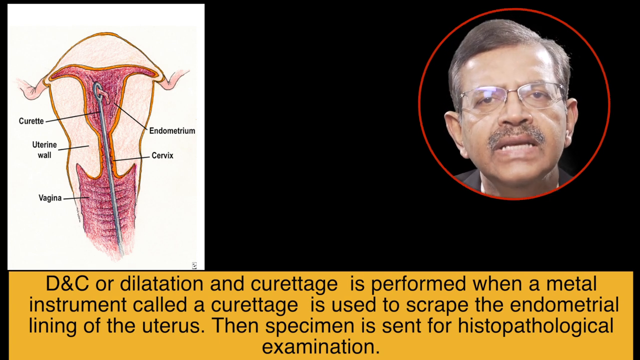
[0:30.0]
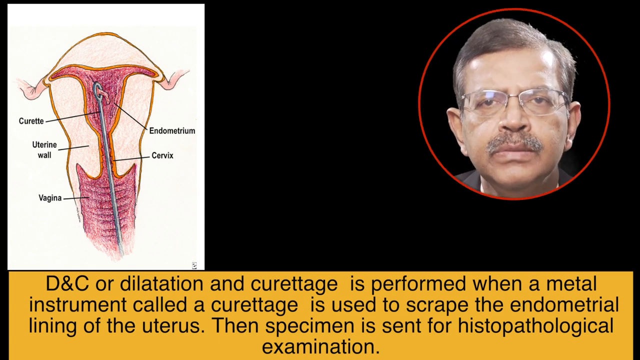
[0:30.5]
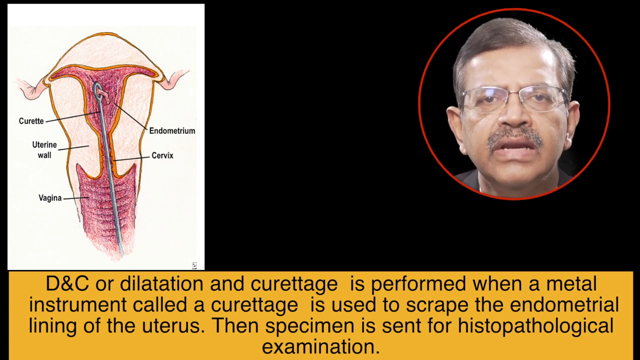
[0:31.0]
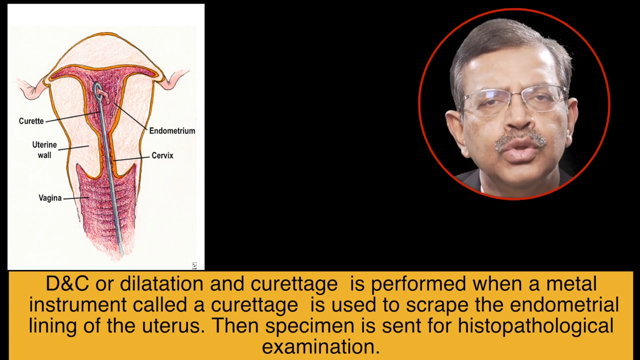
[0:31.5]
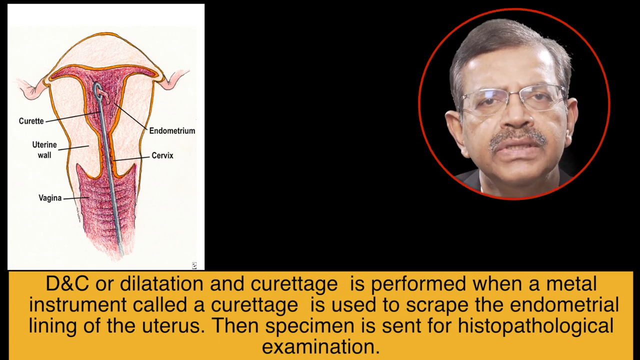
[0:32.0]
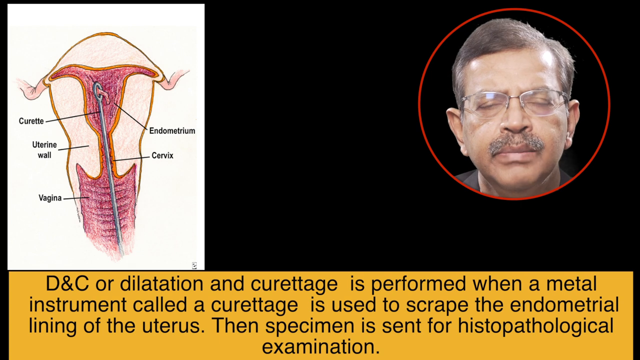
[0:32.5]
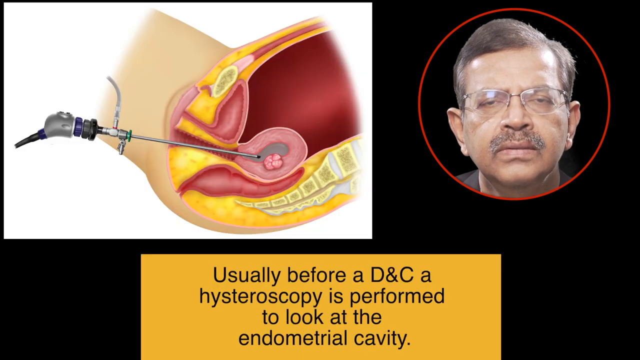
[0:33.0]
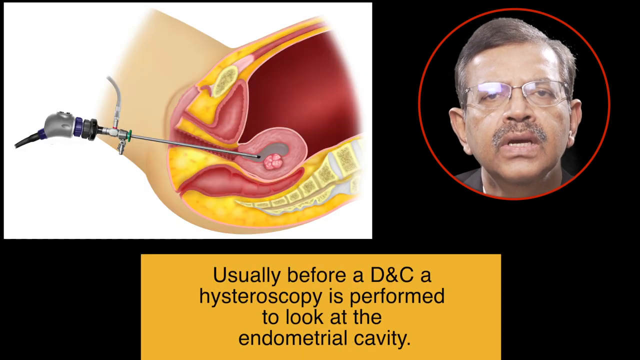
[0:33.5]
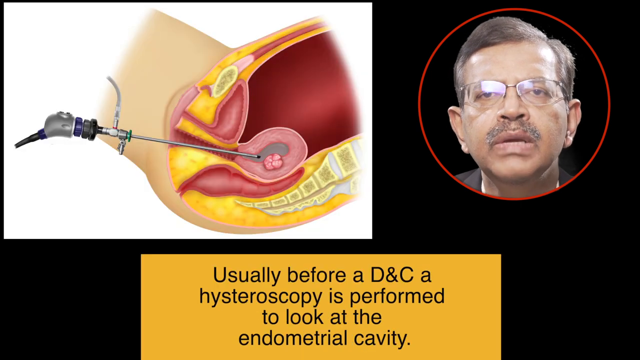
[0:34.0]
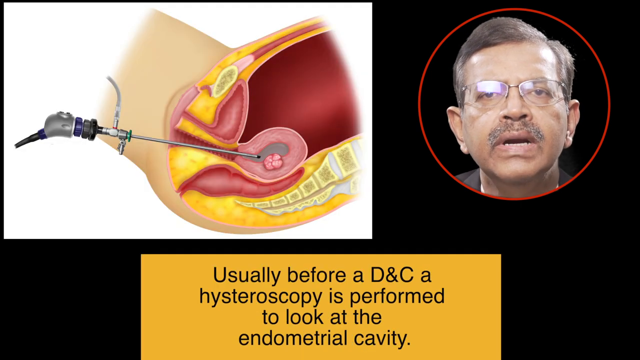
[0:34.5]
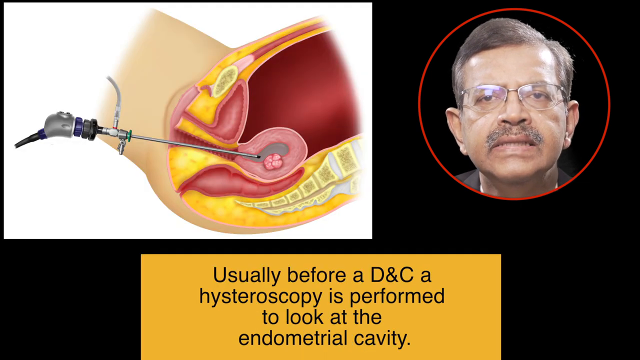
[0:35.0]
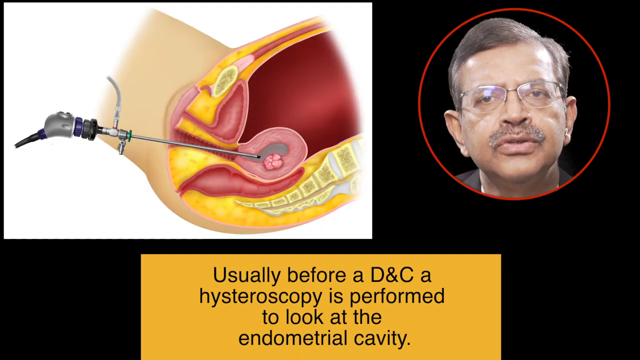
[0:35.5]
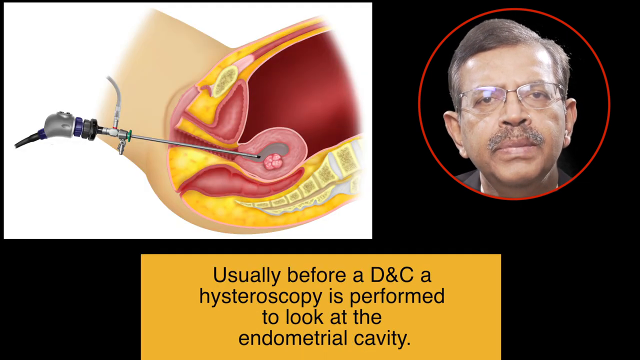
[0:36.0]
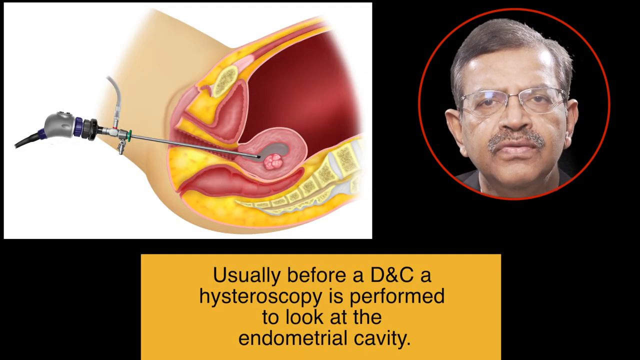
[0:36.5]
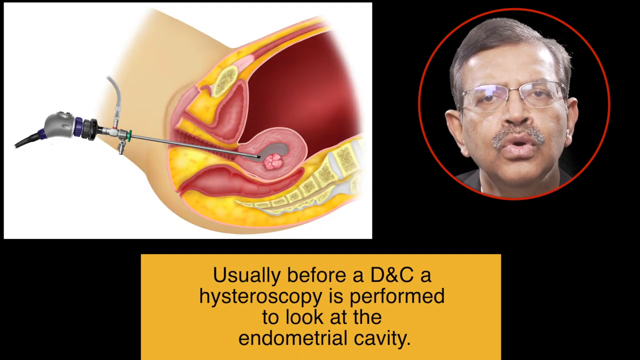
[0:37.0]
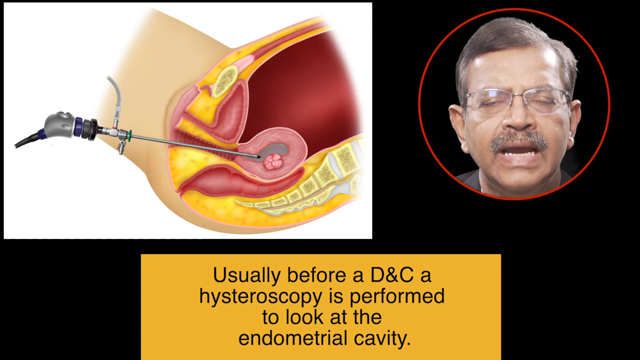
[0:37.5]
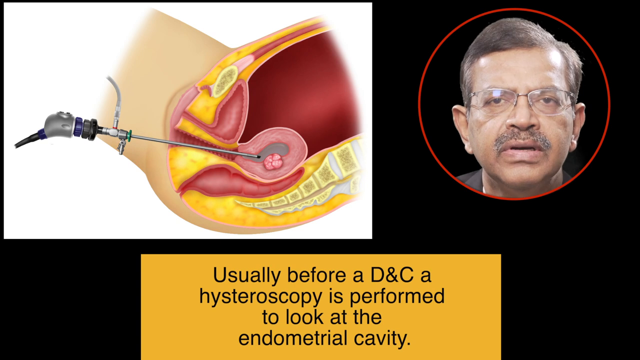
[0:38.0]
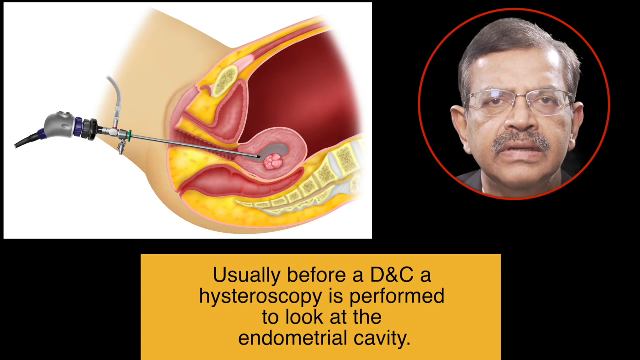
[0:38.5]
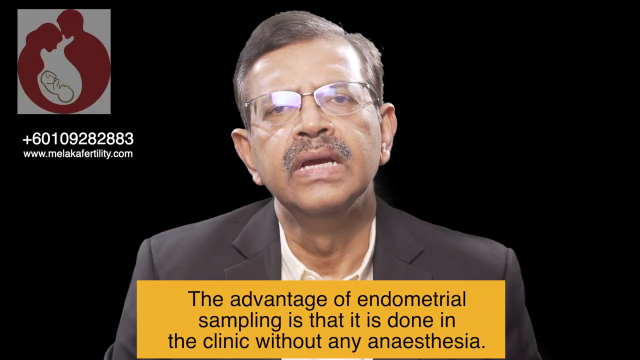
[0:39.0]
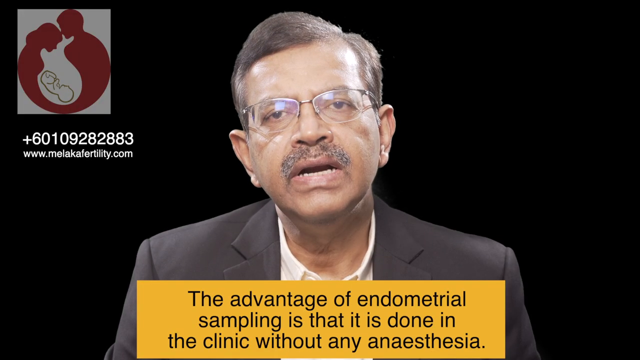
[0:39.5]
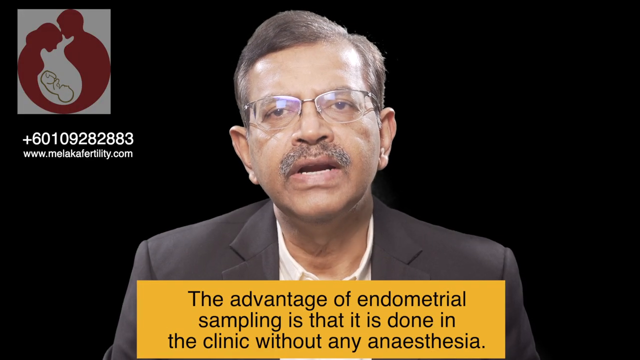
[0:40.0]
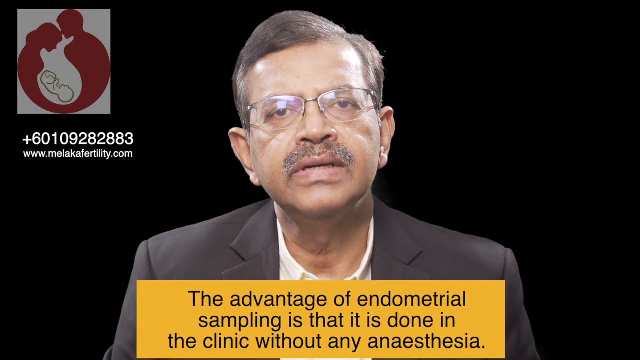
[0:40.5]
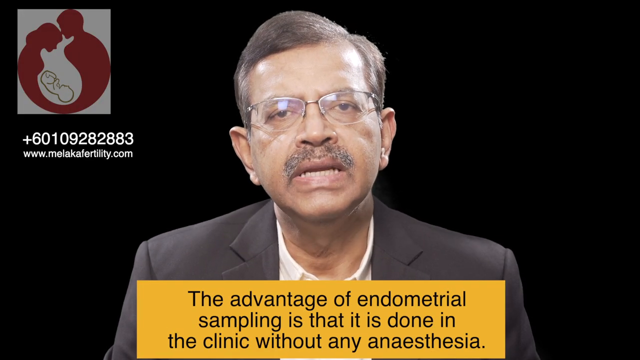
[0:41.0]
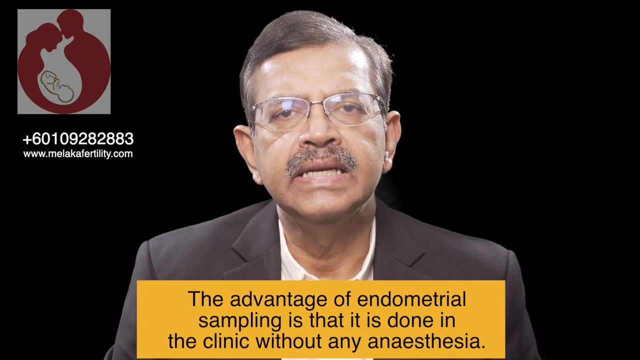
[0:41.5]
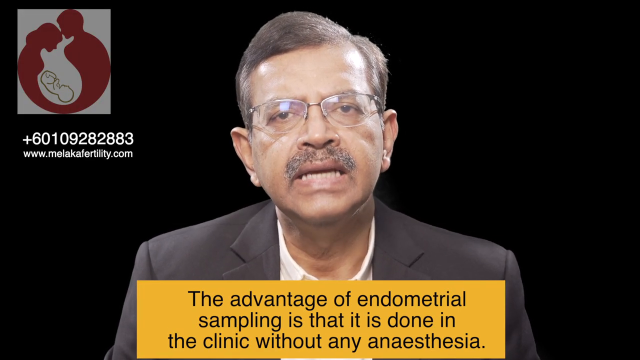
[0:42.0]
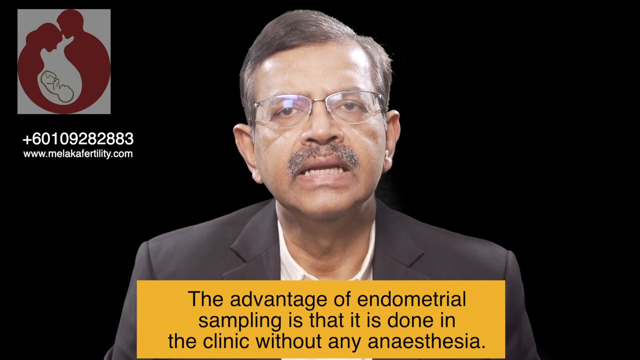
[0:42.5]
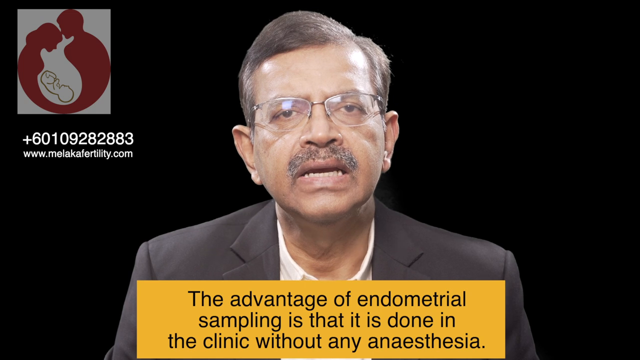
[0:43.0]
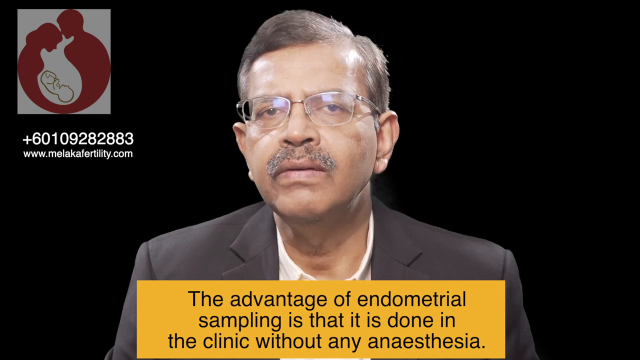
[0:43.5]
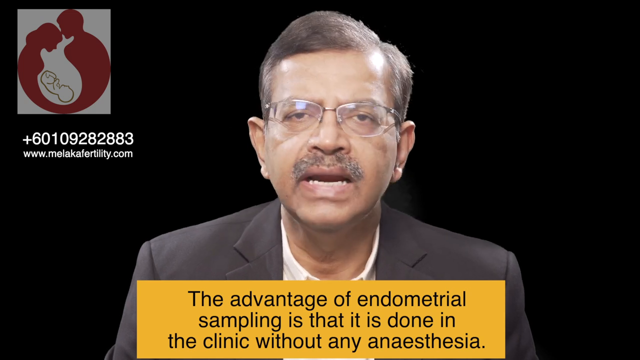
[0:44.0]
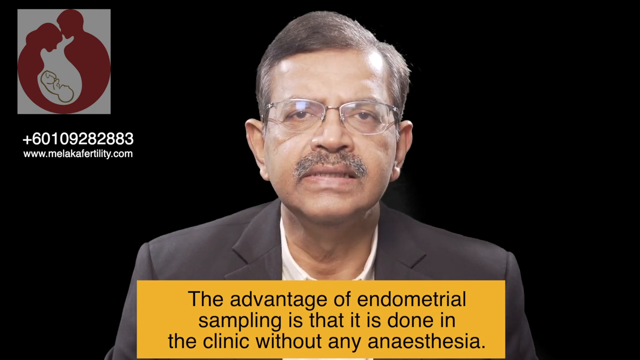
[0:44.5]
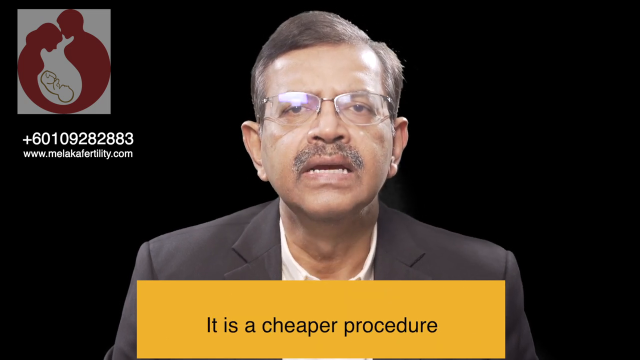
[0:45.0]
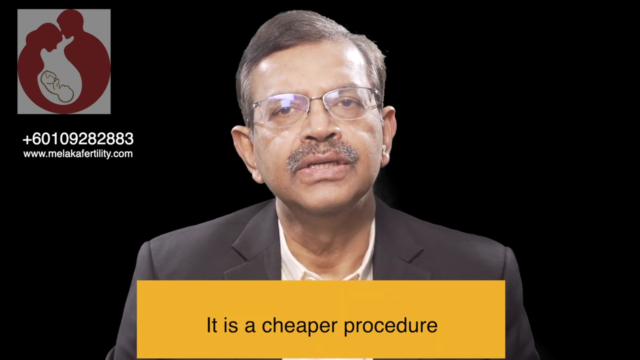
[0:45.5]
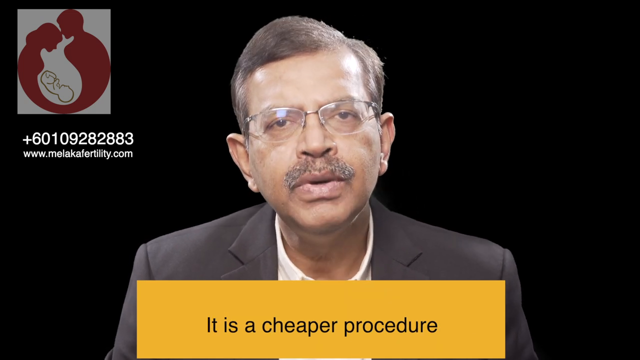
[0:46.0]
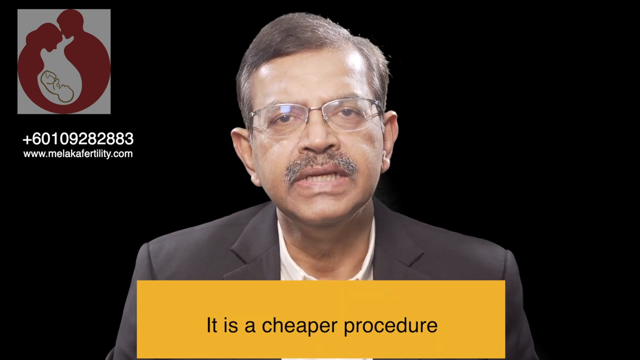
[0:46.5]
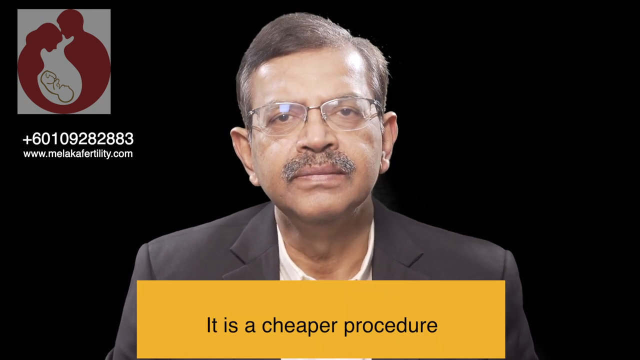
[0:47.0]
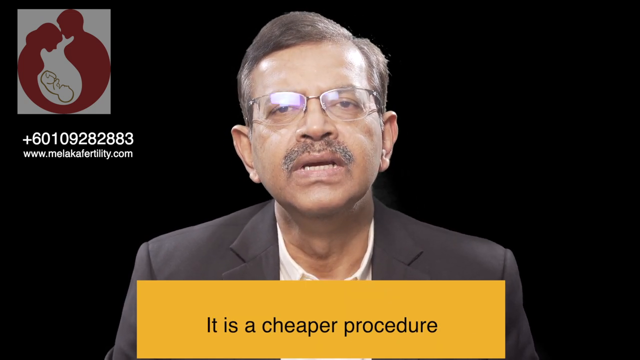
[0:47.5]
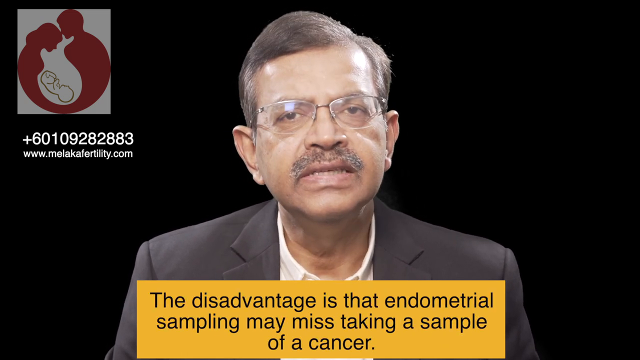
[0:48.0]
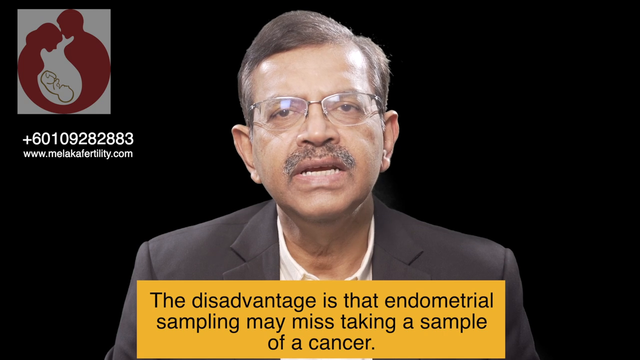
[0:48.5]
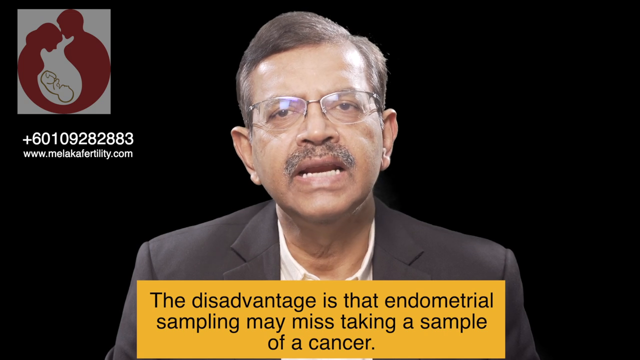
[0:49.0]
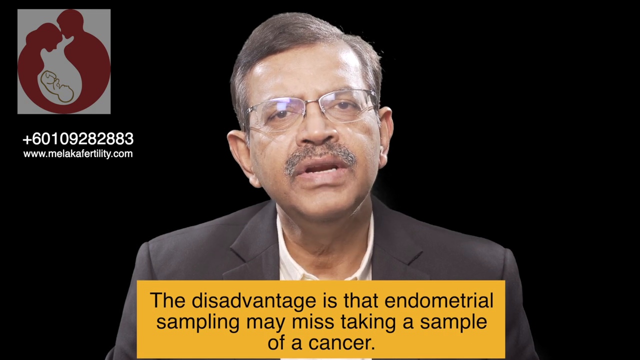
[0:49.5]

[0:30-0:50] The diagram of the metal instrument scraping the lining stays on screen for a few seconds until the next diagram appears, in which a hysteroscopy looks like it is being performed: a long rod comes from a machine and looks like it is going inside the endometrial cavity. The subtitle reads "usually before a D&C a hysteroscopy is performed to look at the endometrial cavity", while the doctor at the top right narrates. The diagram then goes away, leaving a close-up of the doctor from the chest up as he continues, saying "the advantage of endometrial sampling is that it is done in the clinic without any anesthesia." The next subtitle reads "it is a cheaper procedure. The disadvantage is that endometrial sampling may miss taking a sample of a cancer." This part has no diagrams.